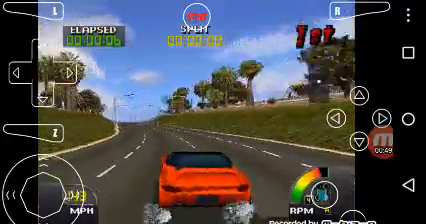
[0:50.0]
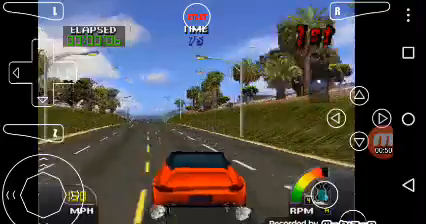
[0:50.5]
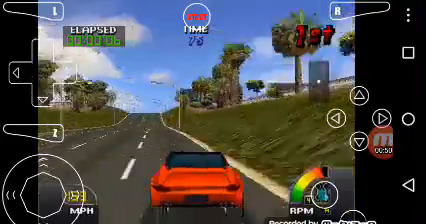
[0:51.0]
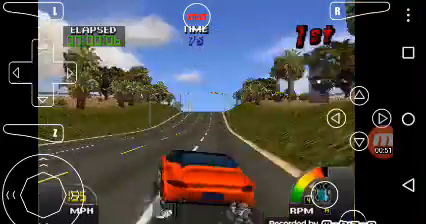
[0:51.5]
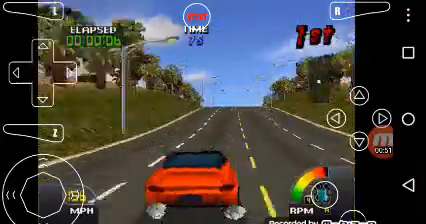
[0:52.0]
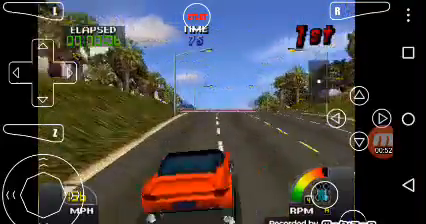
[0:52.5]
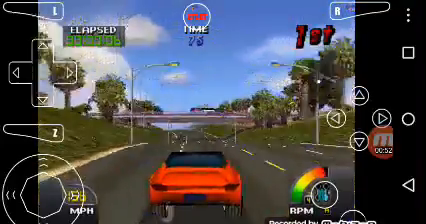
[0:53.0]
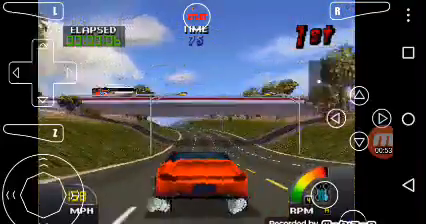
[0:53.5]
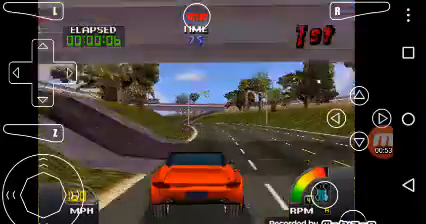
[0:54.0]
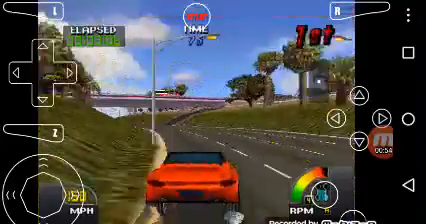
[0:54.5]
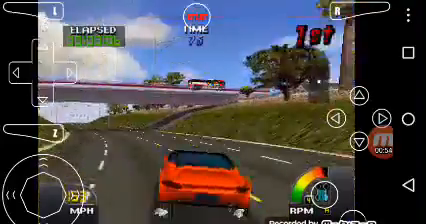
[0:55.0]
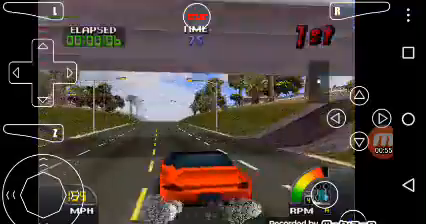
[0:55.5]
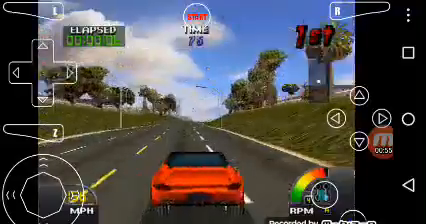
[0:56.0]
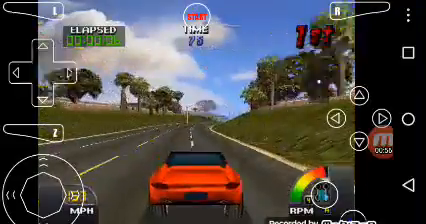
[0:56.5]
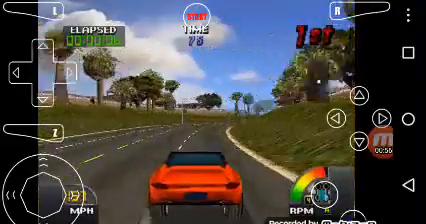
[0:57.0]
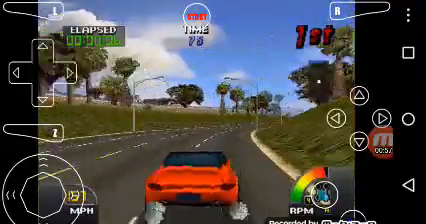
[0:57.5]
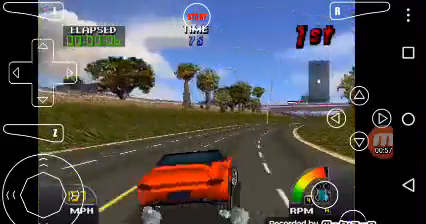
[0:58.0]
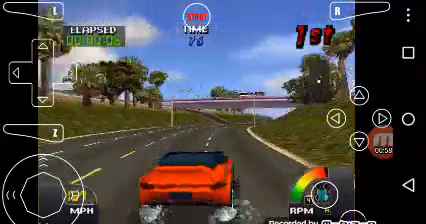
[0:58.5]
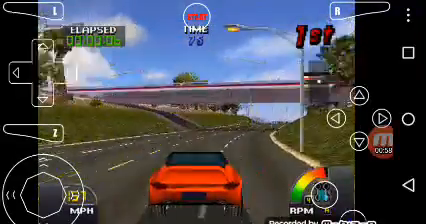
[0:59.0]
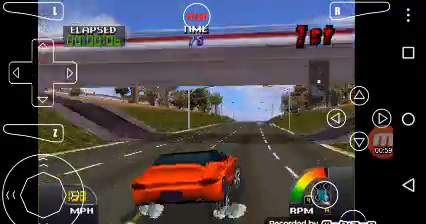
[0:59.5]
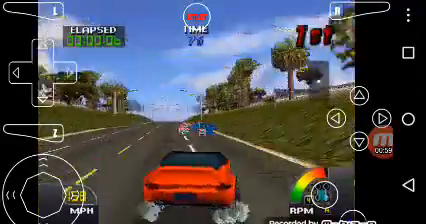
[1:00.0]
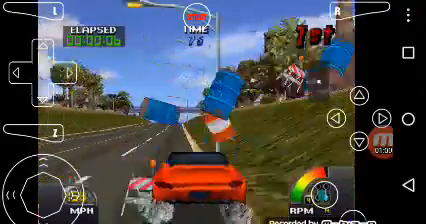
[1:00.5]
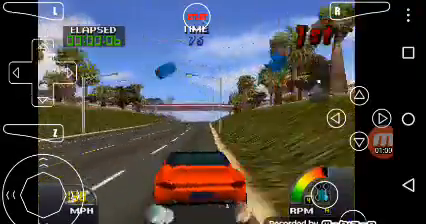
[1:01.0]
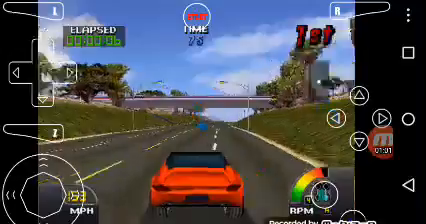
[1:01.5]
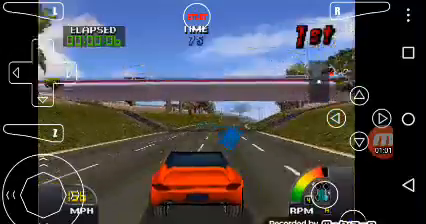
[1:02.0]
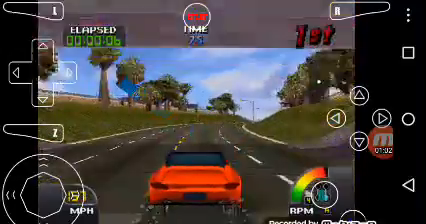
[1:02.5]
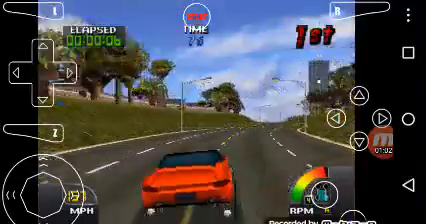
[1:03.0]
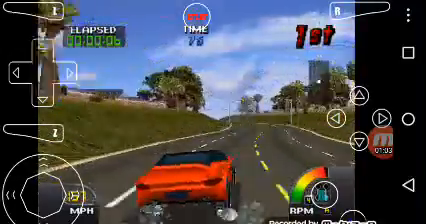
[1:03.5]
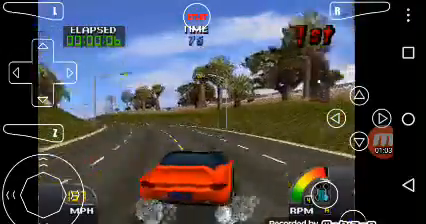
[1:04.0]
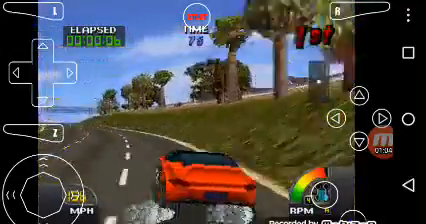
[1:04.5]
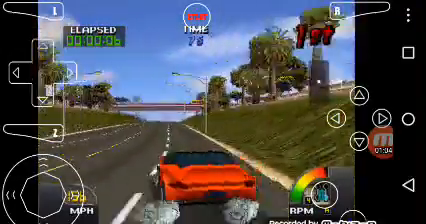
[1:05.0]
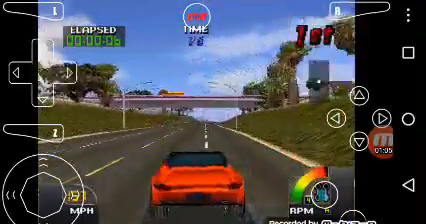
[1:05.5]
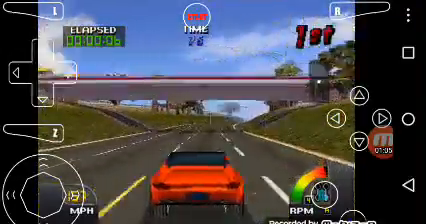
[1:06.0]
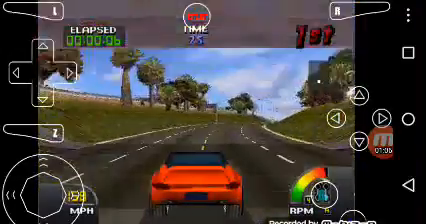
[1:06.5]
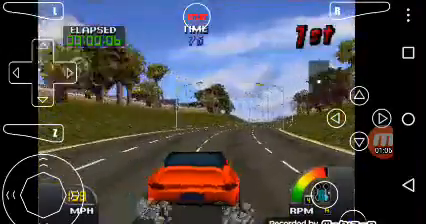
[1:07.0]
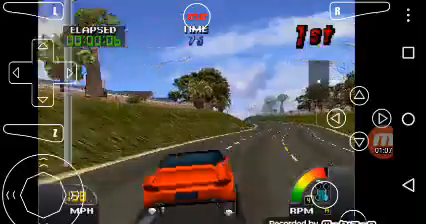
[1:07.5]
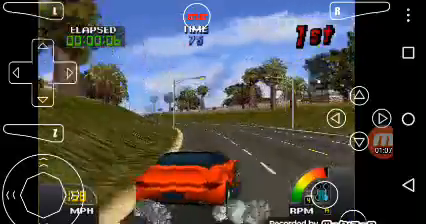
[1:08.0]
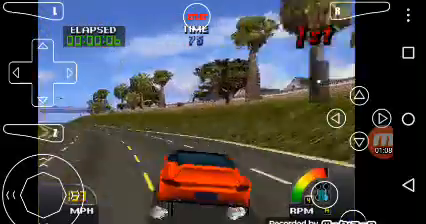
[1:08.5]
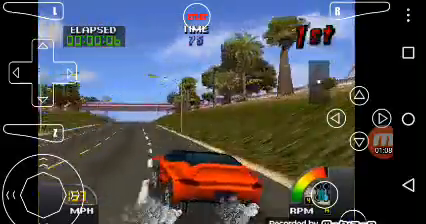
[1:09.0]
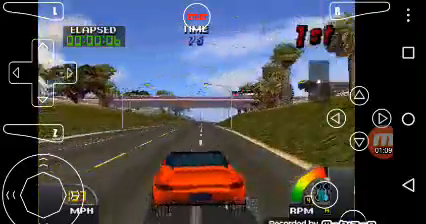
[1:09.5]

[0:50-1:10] The video game shows the red car with a black top racing on a highway; it looks like a timed game. The car's place is shown at the upper right. An overlay of controller buttons appears: on the right side is a right button, and below it are triangles in circles indicating left, right, up and down. On the left side there are more left, right, up and down buttons. A time is shown in the upper middle, and another time at the upper right says "elapsed".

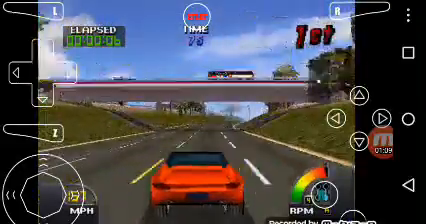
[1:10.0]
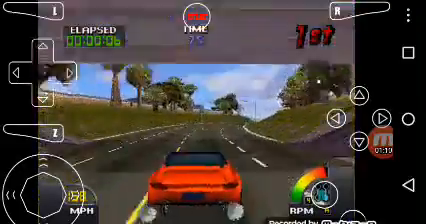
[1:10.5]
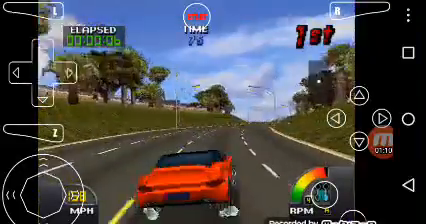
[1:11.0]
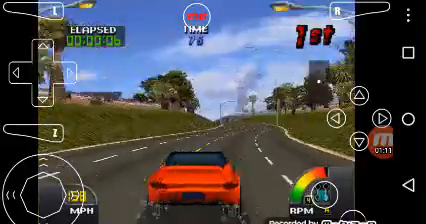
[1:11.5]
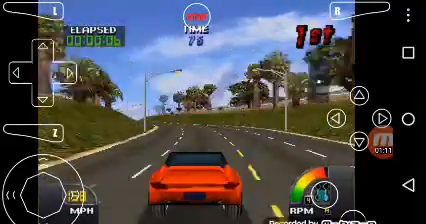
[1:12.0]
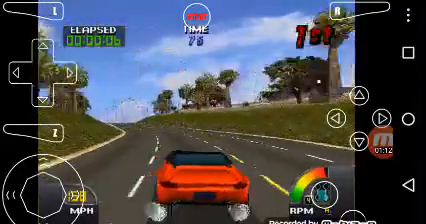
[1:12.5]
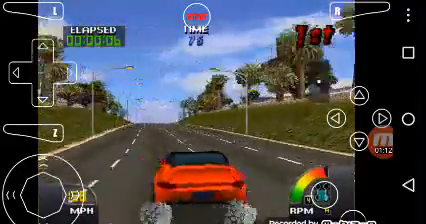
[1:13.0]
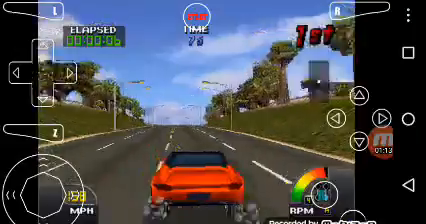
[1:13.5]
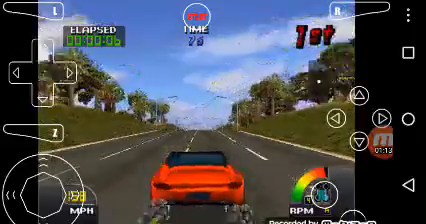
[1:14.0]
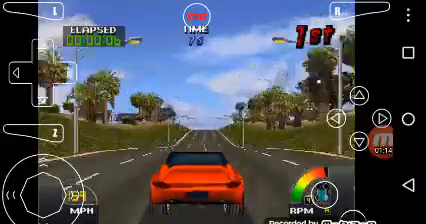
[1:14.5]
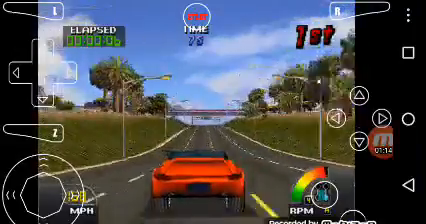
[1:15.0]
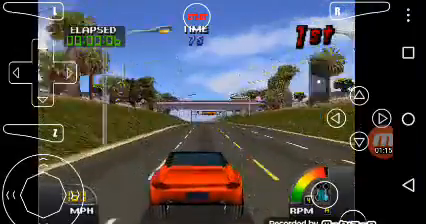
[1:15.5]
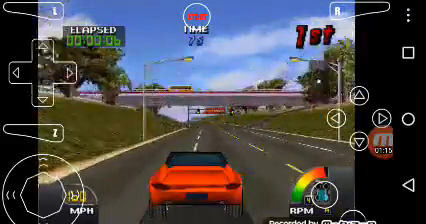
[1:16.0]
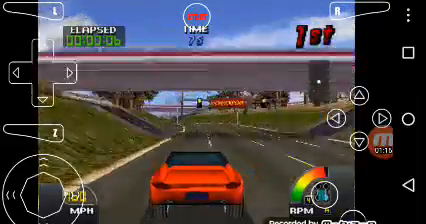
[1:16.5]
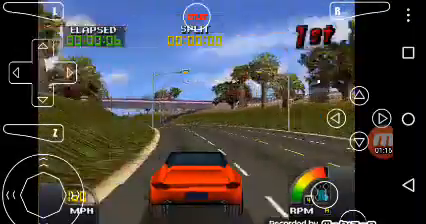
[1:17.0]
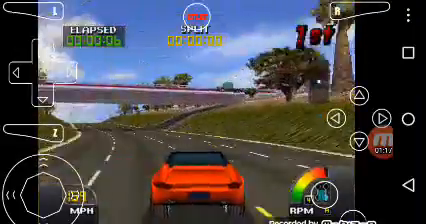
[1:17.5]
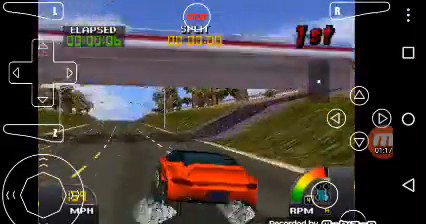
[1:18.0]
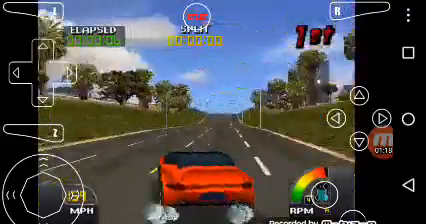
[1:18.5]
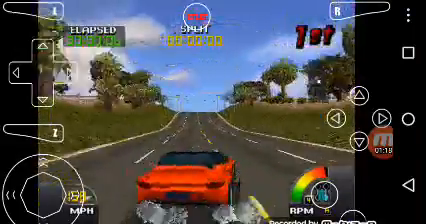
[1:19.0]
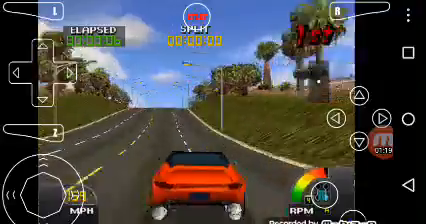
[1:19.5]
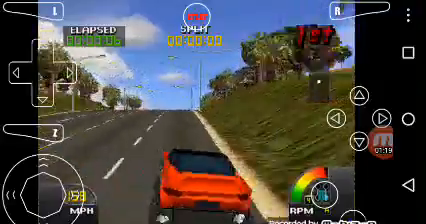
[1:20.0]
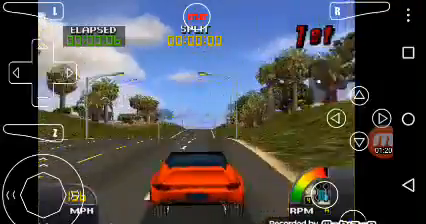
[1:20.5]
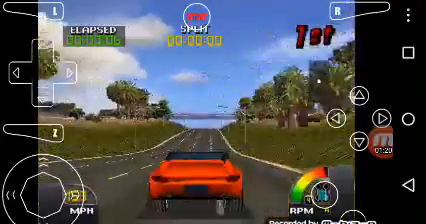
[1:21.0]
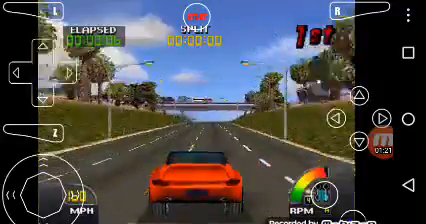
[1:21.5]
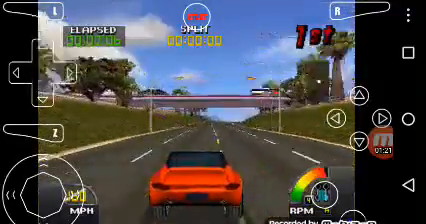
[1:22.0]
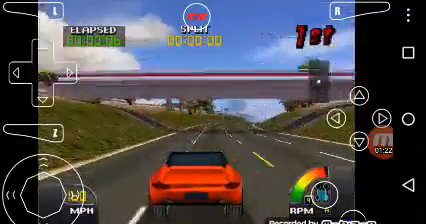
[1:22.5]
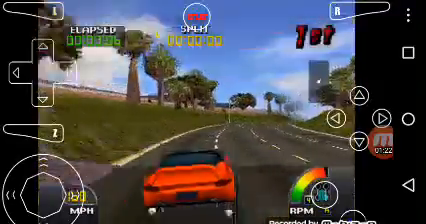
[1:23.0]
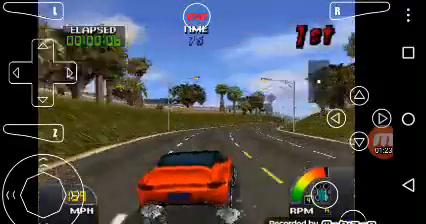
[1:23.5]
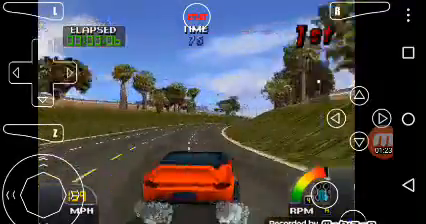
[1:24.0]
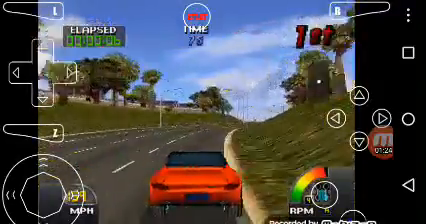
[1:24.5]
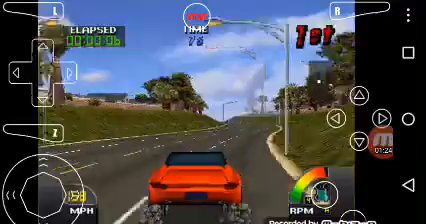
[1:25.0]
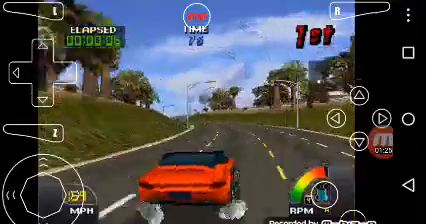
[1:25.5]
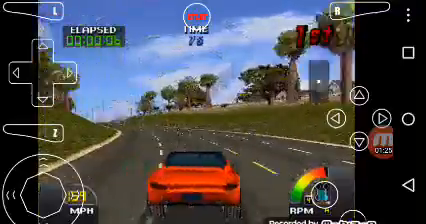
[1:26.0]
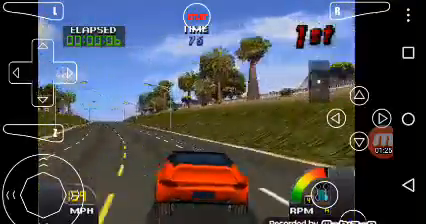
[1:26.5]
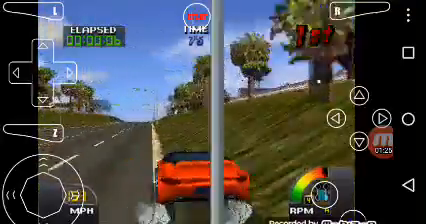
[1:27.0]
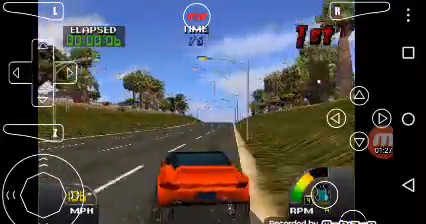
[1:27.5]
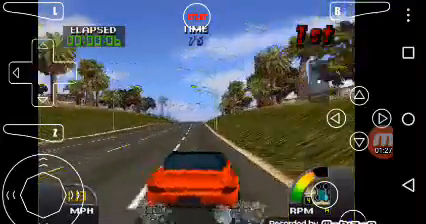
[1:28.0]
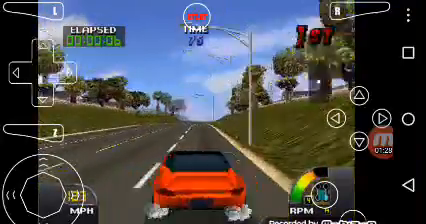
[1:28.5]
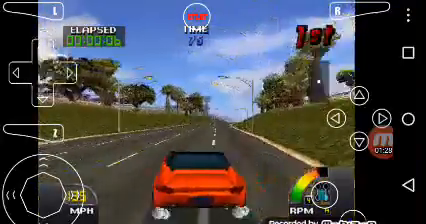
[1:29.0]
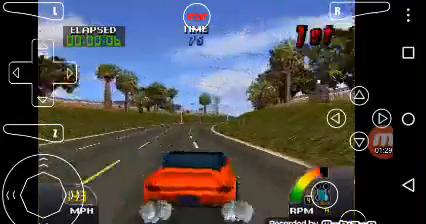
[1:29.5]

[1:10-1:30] The racing game shows the red car with a black top on a four-lane highway. Bridges appear as the video progresses, and both sides of the road have grass. At the bottom right is what looks to be a gas gauge or possibly a shift gauge, colored green, yellow and red toward the top. At the upper right, the car's place shows "first", and there is a time gauge that says "elapsed".